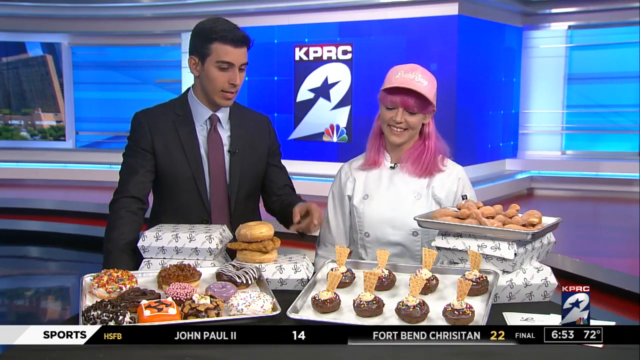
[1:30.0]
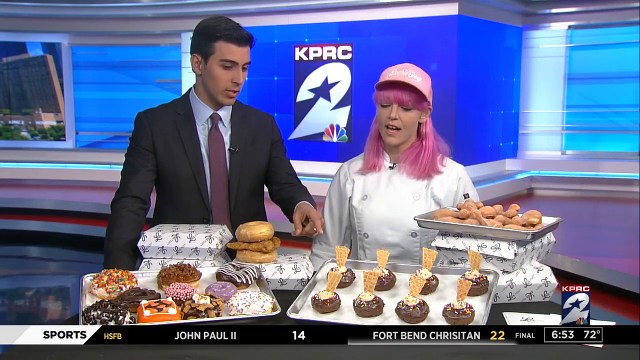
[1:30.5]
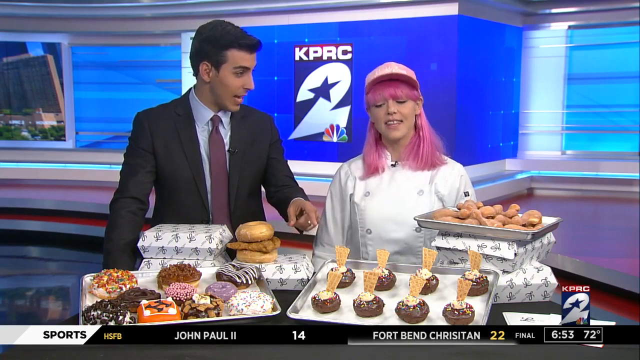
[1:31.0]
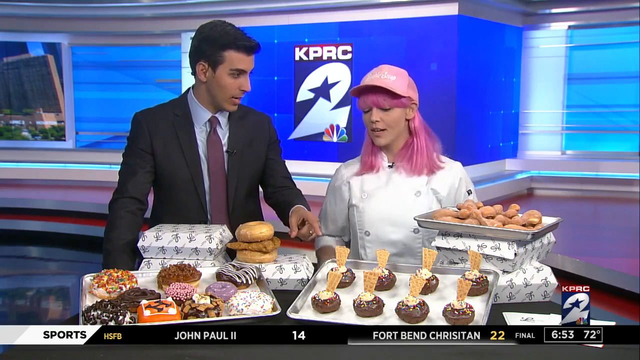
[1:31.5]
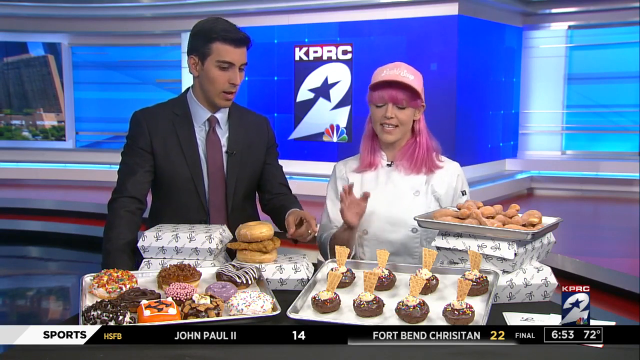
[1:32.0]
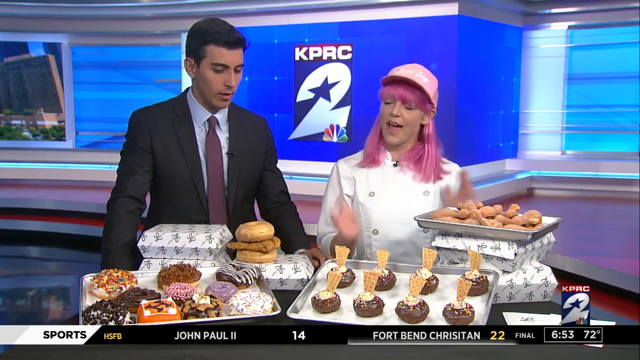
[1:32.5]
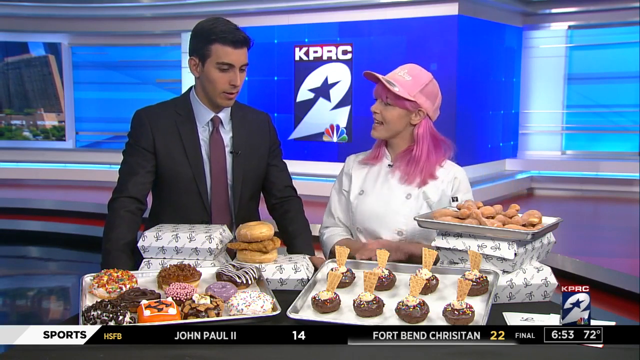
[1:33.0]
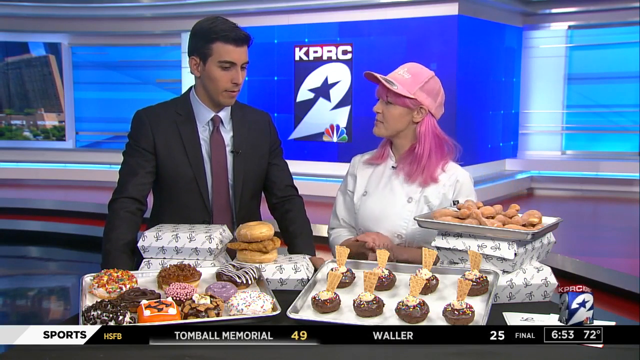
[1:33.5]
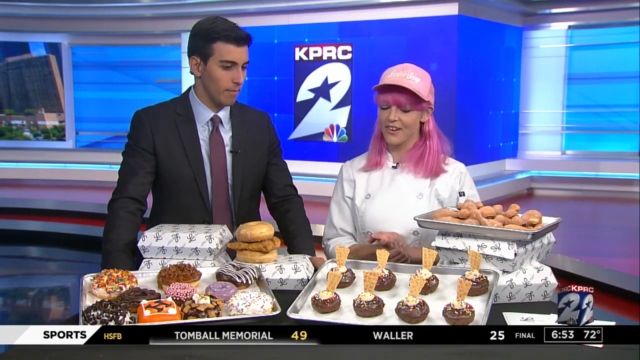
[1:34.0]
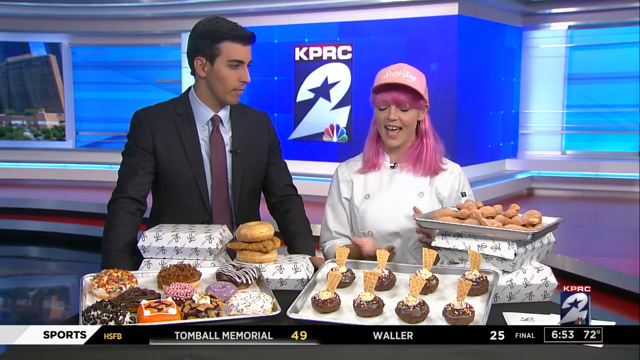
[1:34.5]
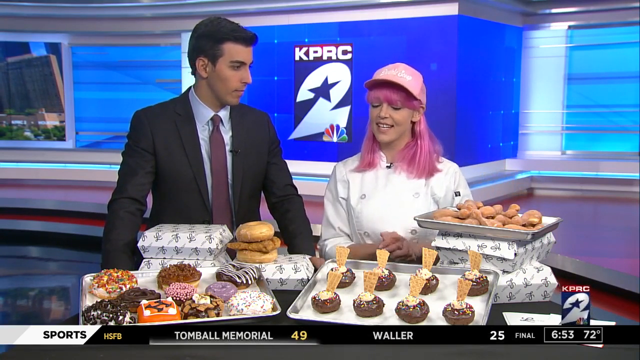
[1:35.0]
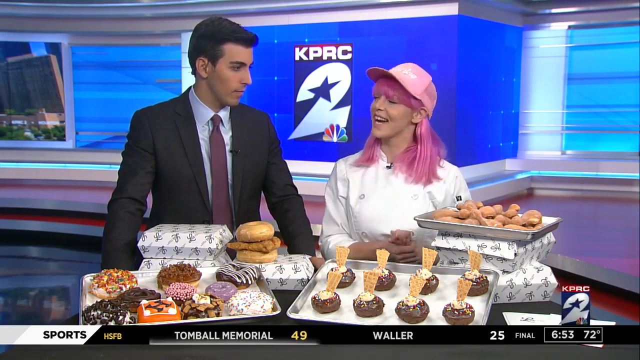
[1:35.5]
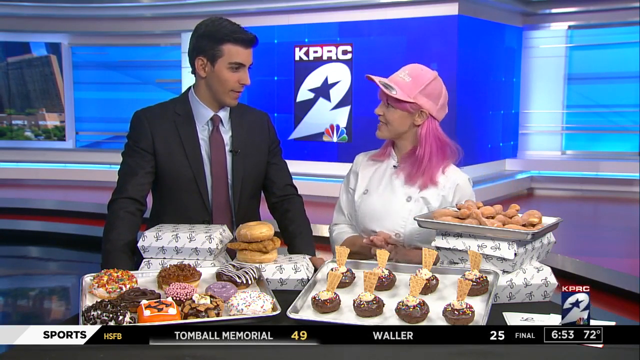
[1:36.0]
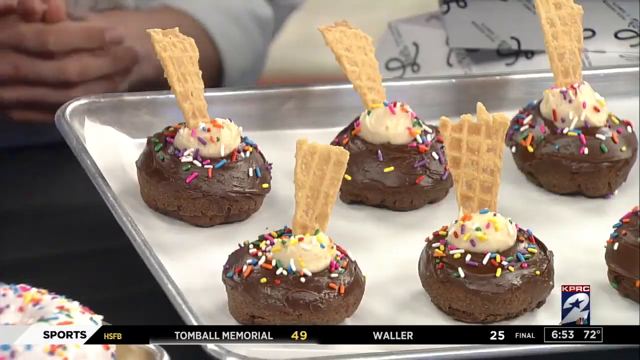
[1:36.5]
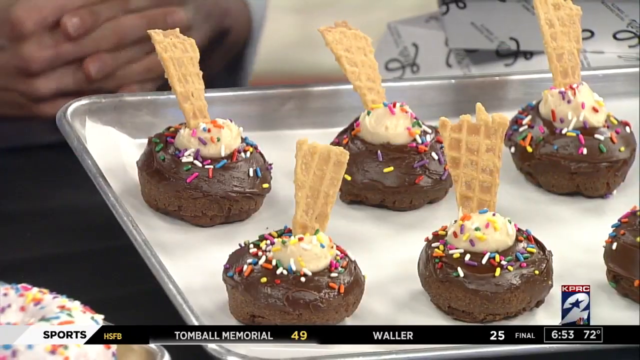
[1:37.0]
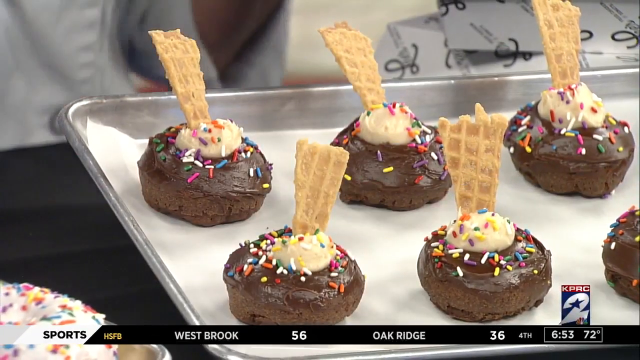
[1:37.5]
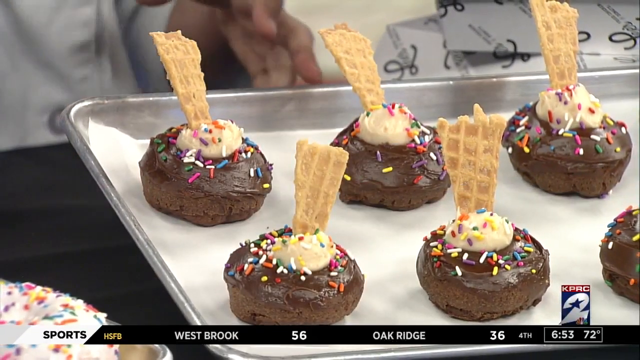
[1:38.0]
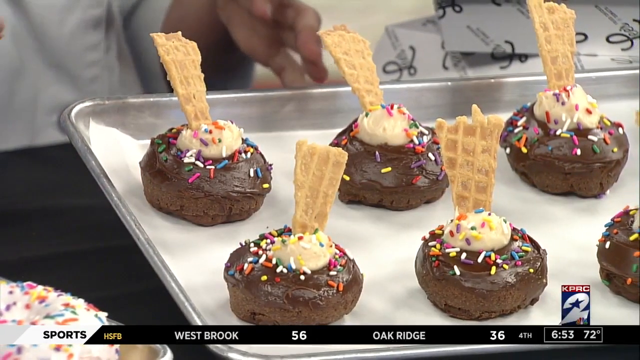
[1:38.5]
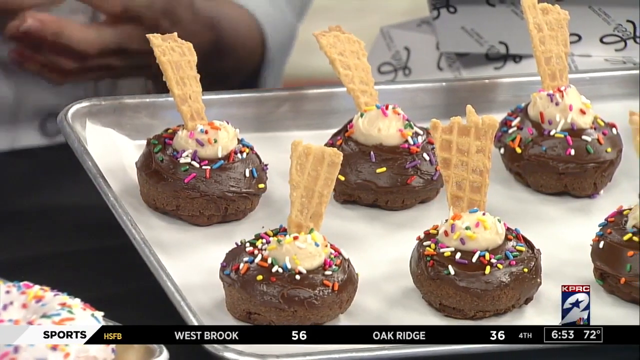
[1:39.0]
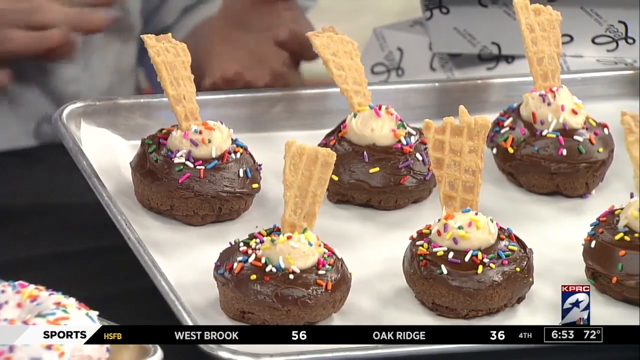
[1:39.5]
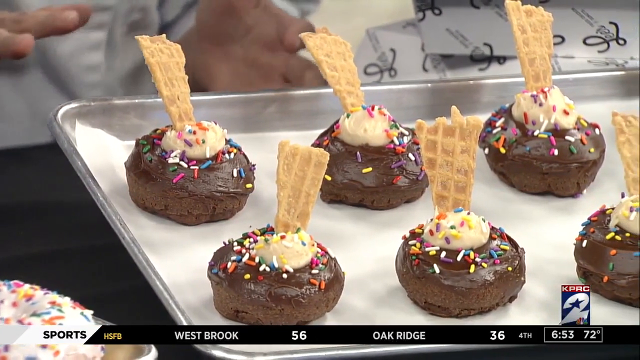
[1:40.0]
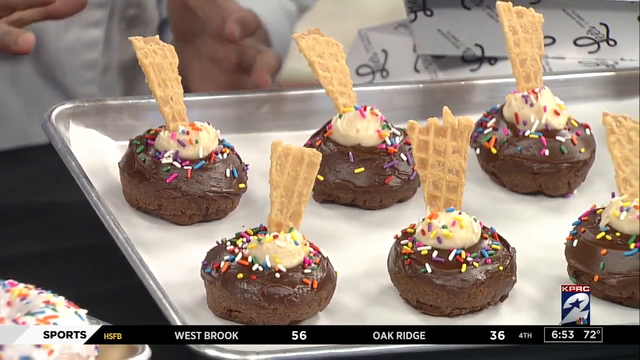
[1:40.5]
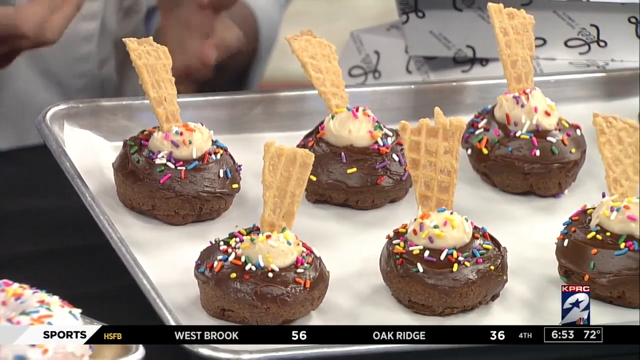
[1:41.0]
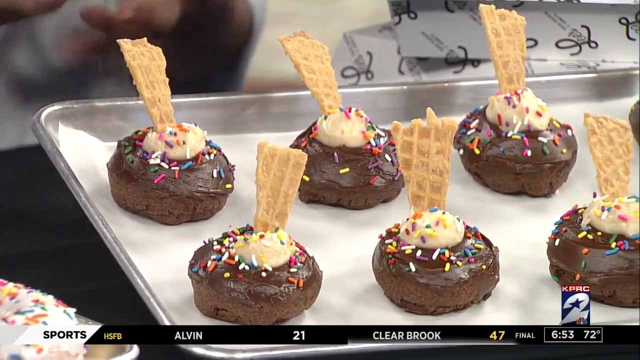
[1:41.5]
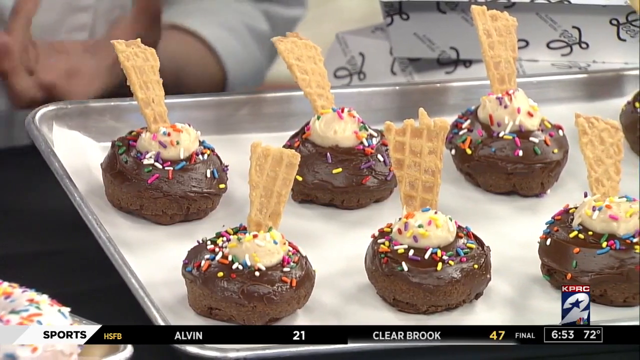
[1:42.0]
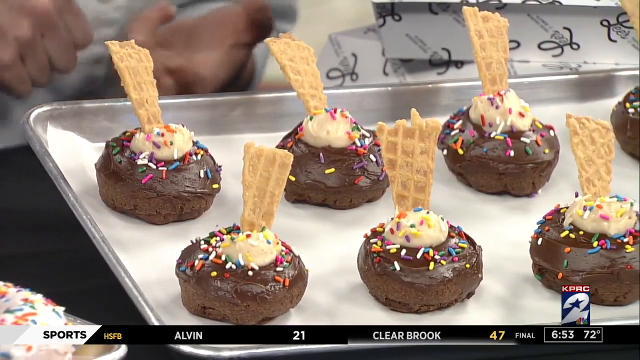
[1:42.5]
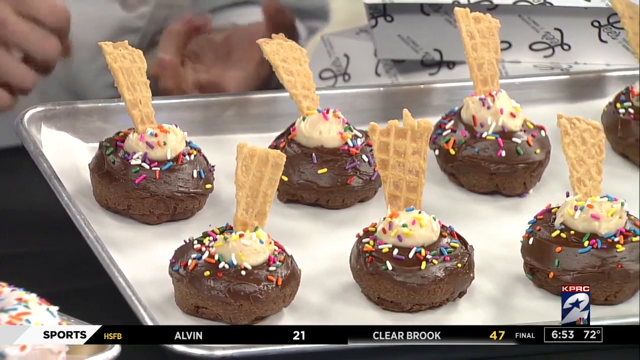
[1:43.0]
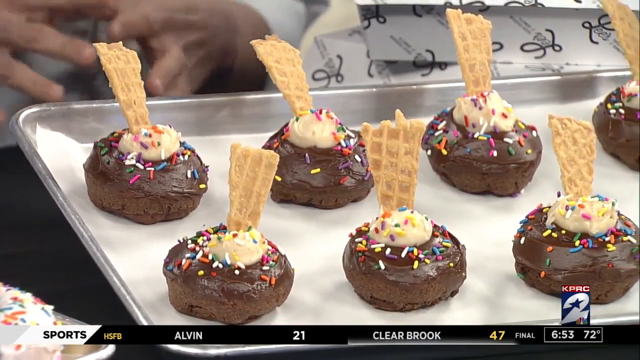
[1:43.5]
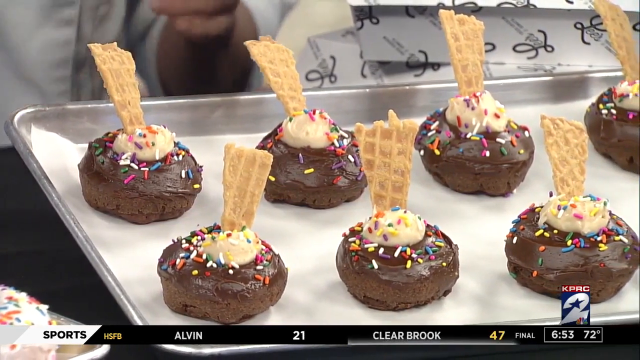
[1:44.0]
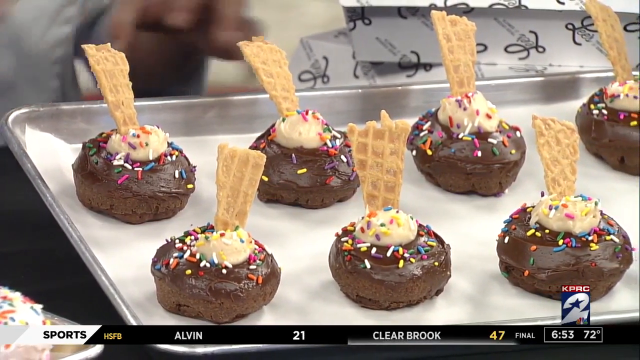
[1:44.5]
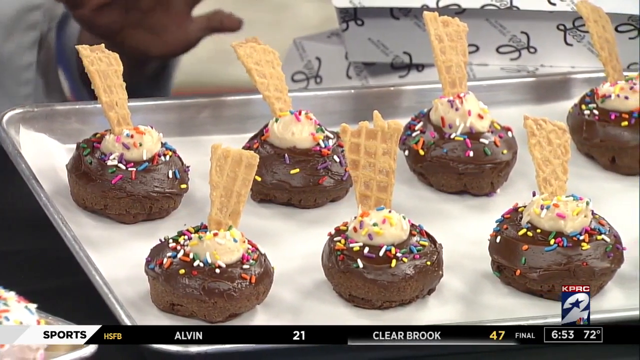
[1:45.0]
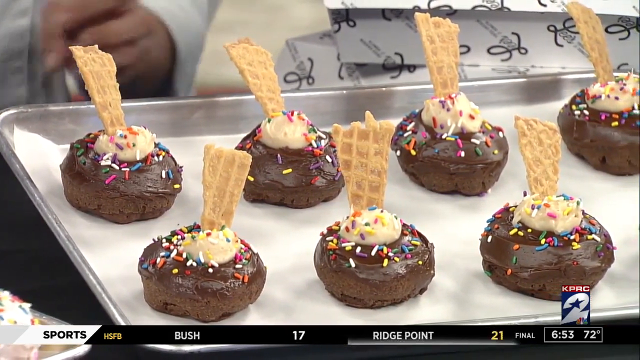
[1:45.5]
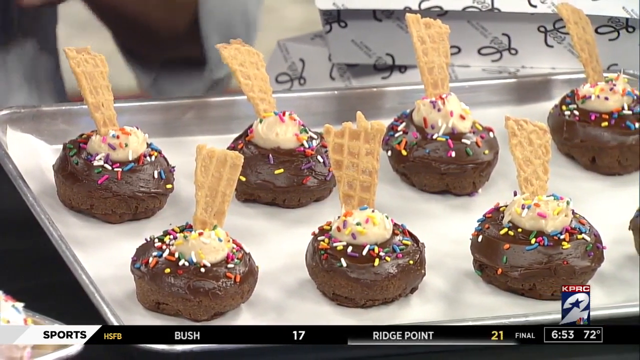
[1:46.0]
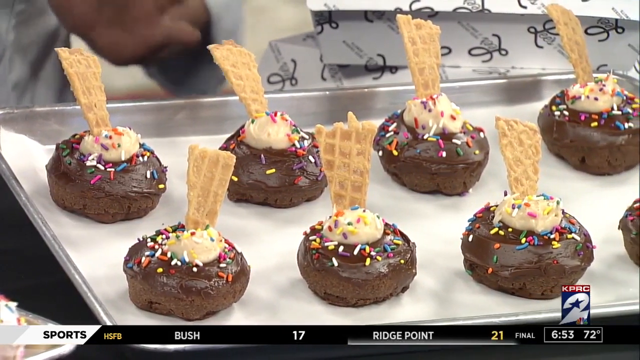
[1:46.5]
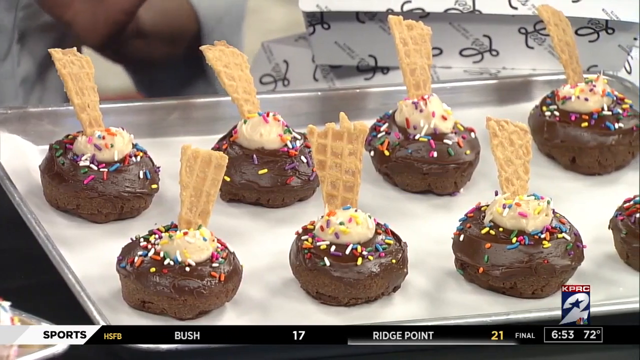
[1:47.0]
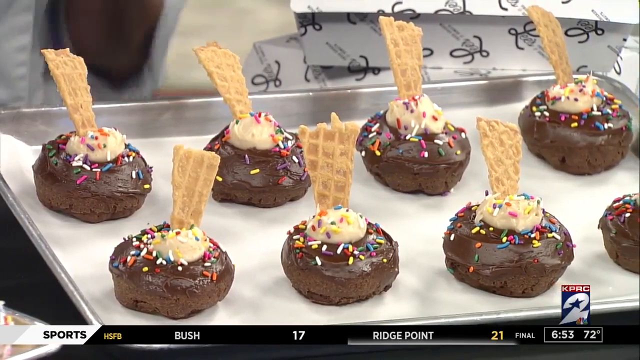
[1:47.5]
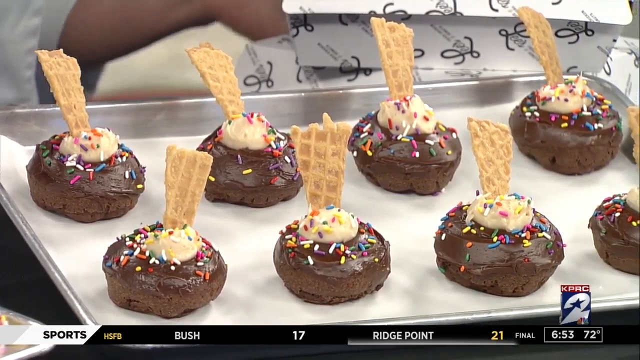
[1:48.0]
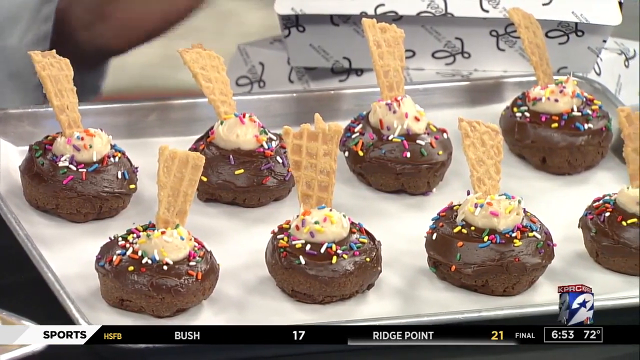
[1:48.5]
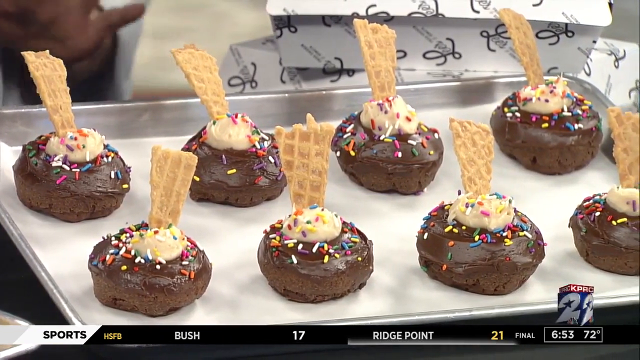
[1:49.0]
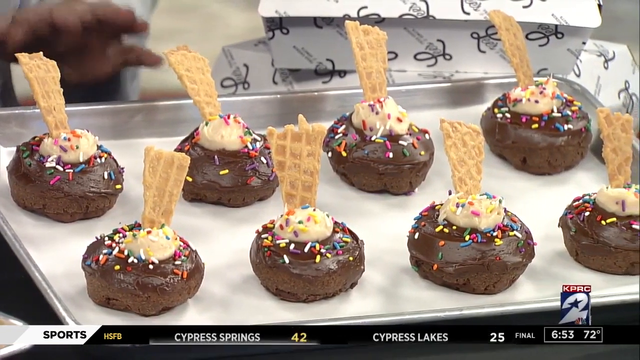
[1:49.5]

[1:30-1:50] On the KPRC2 show, a man in a black suit presents donuts made by a woman. Small chocolate muffins appear, very small and round, with wafers on top and colorful toppings. She points at them and gestures with her hands, probably talking about how she bakes and designs them. The presenter is next to her, interviewing her about the donuts and cupcakes shown.